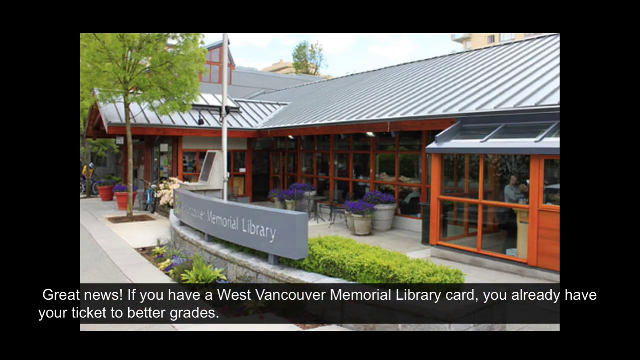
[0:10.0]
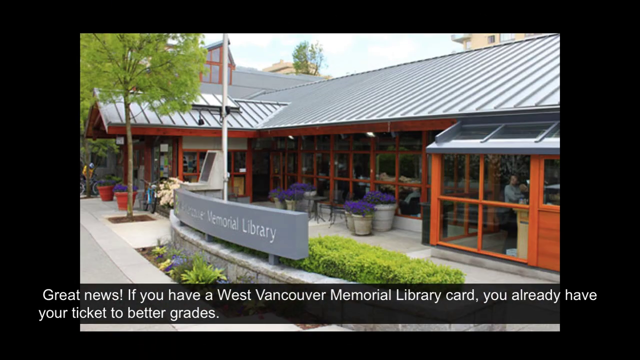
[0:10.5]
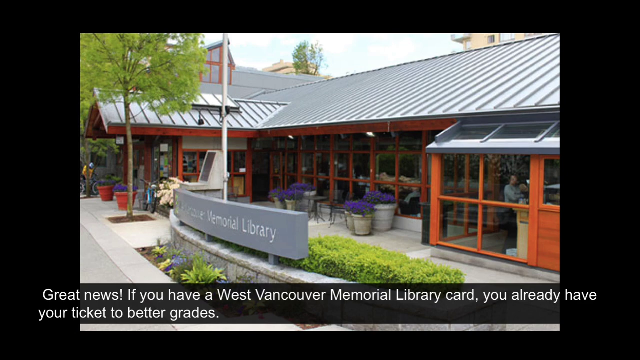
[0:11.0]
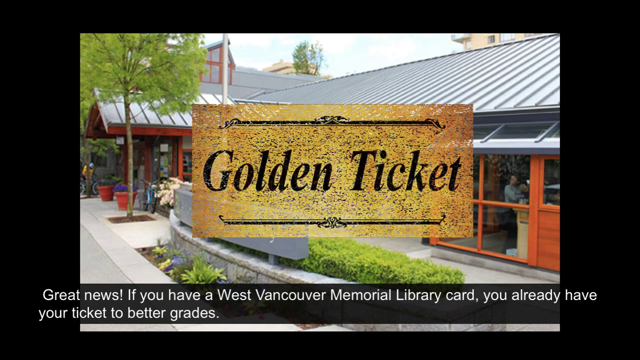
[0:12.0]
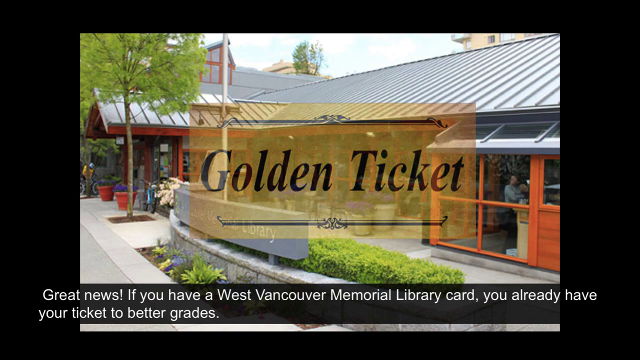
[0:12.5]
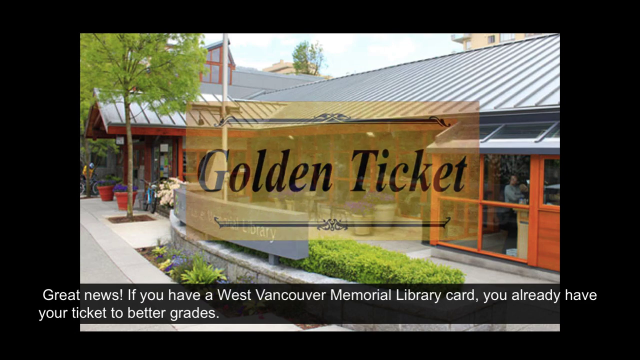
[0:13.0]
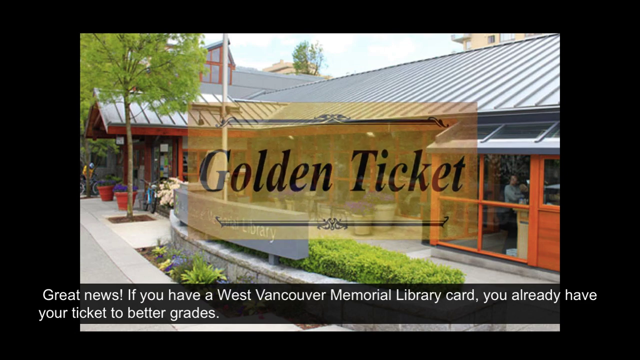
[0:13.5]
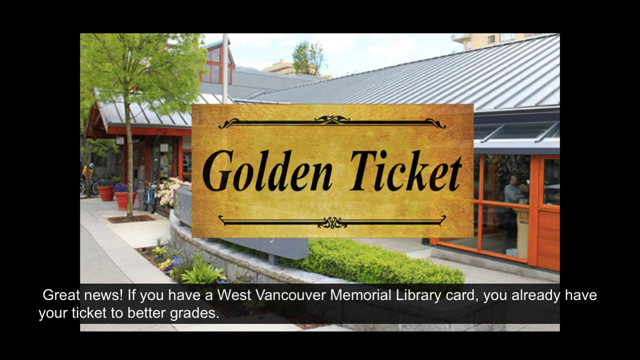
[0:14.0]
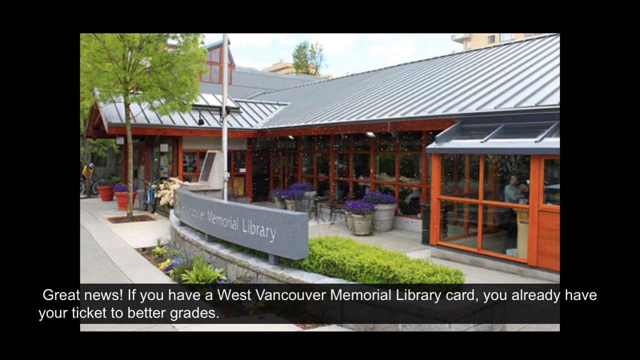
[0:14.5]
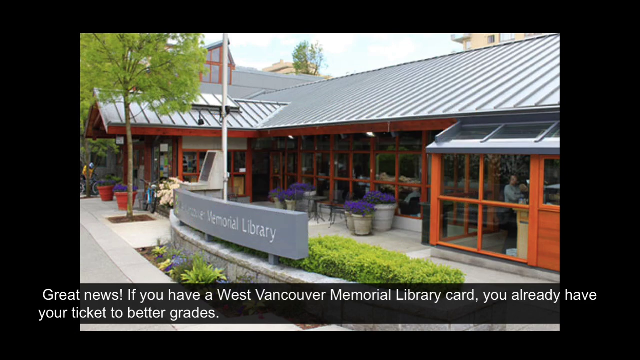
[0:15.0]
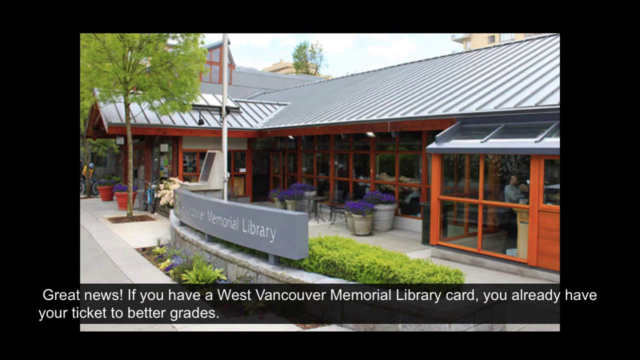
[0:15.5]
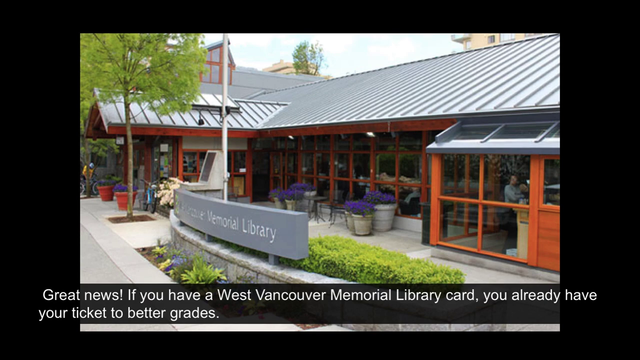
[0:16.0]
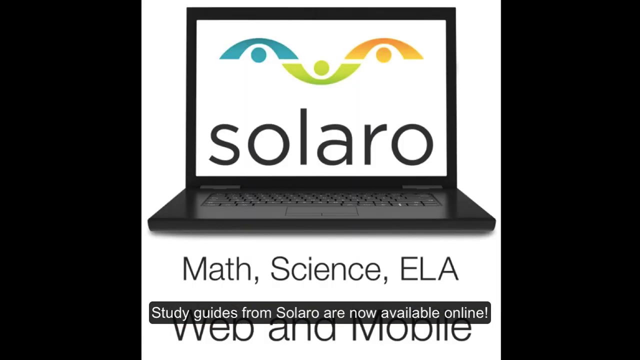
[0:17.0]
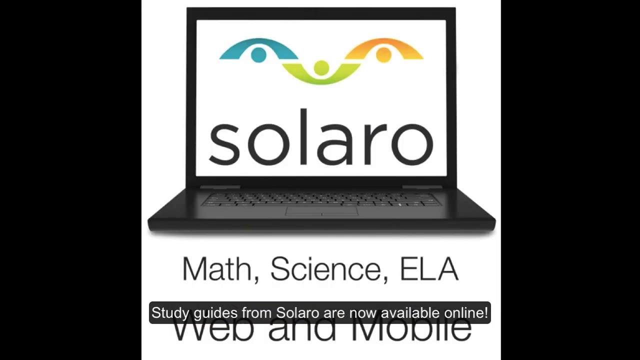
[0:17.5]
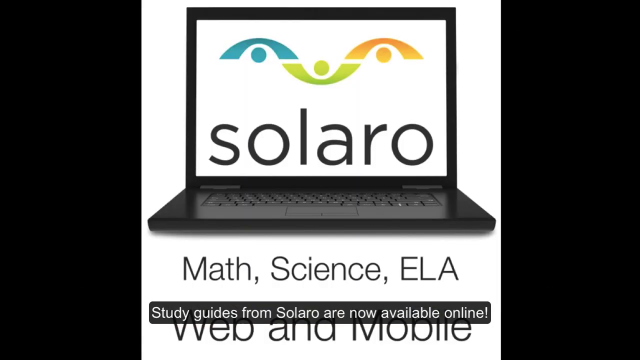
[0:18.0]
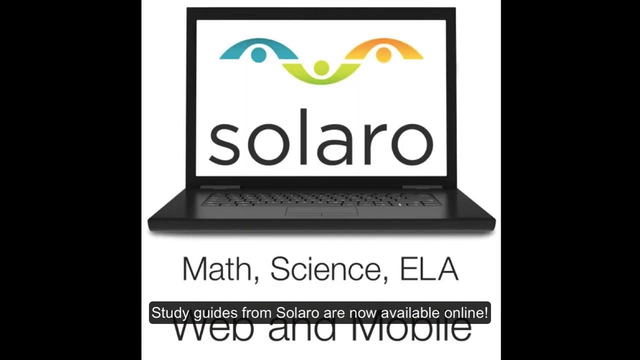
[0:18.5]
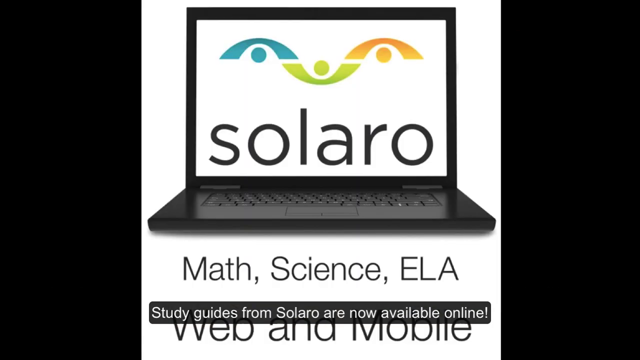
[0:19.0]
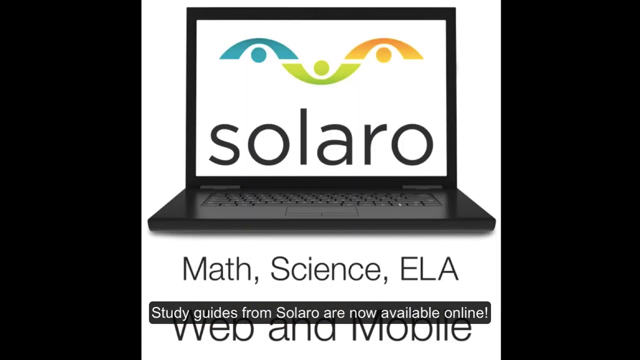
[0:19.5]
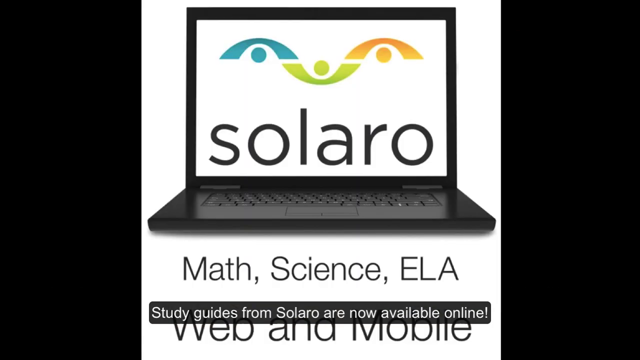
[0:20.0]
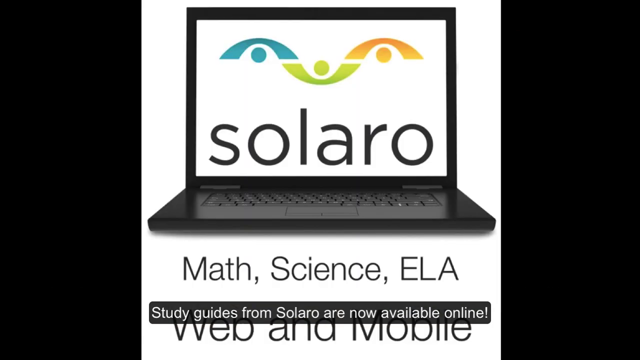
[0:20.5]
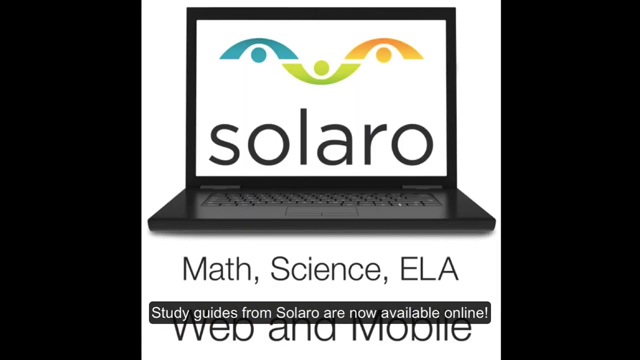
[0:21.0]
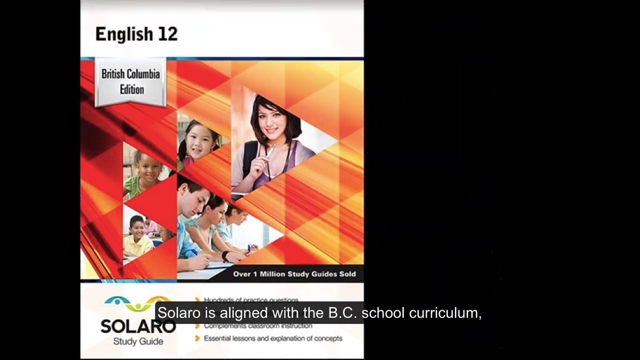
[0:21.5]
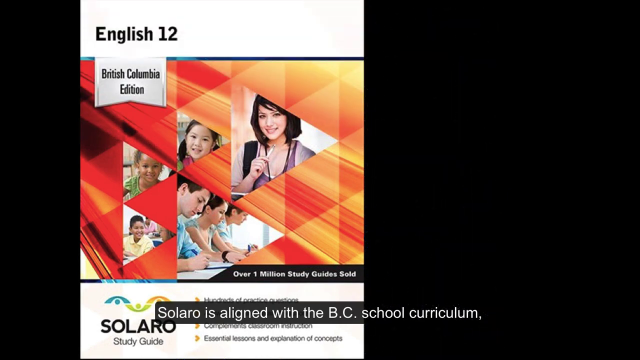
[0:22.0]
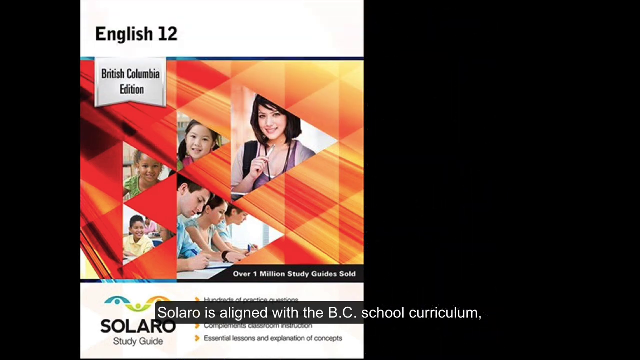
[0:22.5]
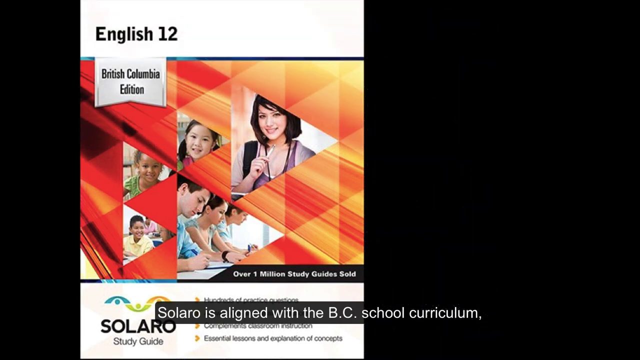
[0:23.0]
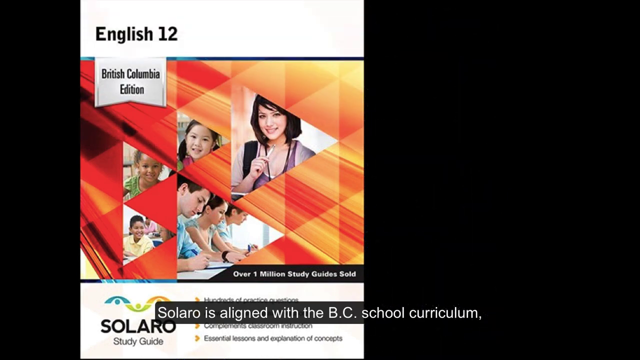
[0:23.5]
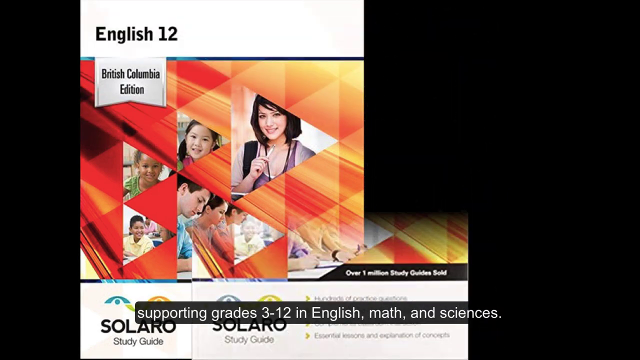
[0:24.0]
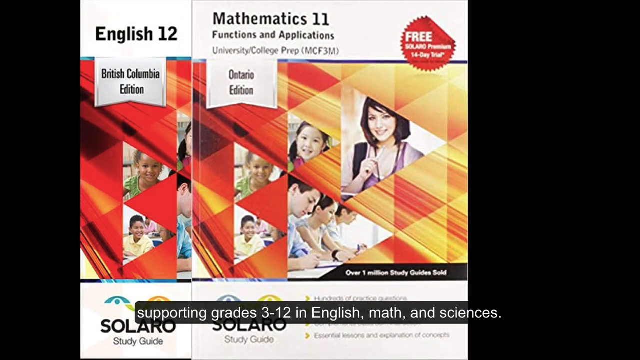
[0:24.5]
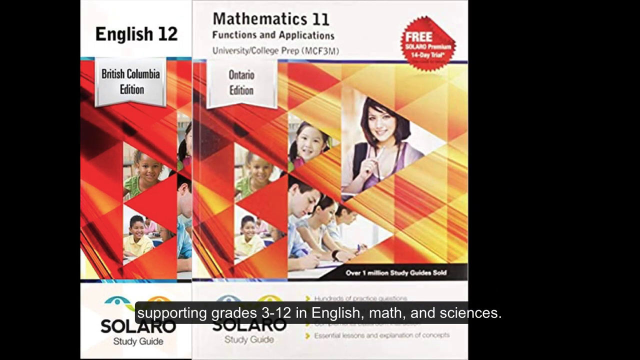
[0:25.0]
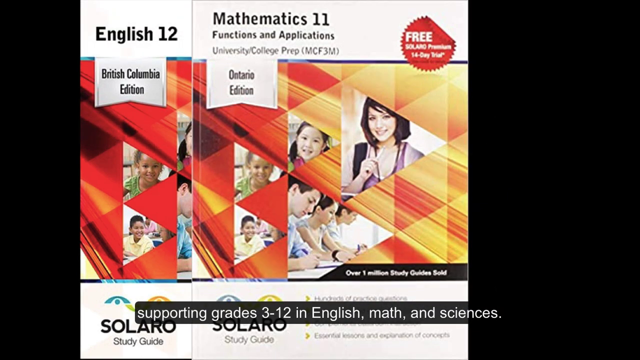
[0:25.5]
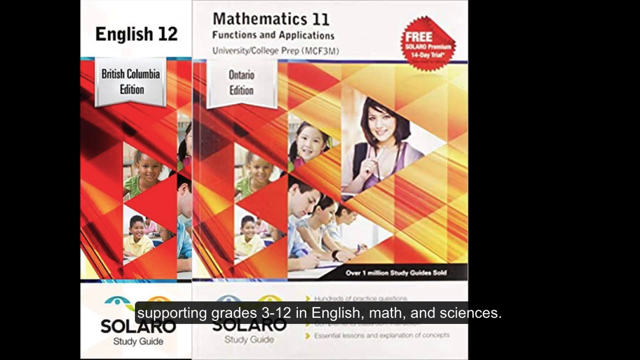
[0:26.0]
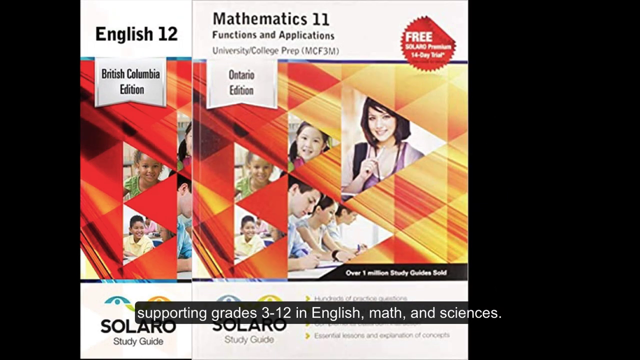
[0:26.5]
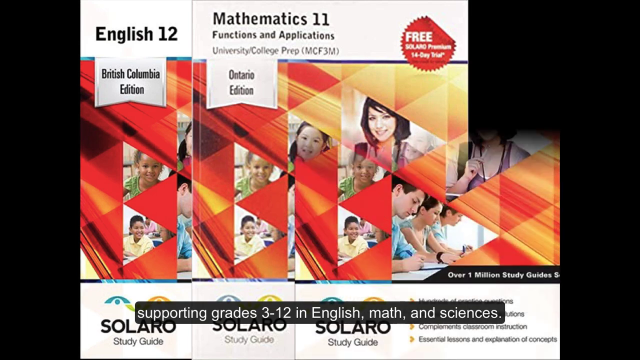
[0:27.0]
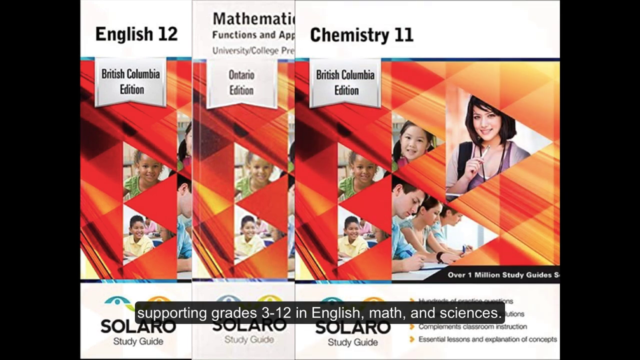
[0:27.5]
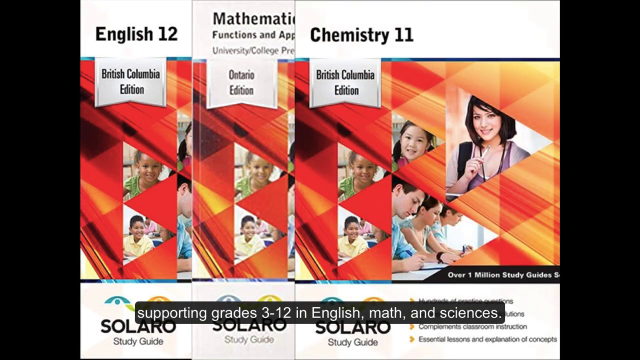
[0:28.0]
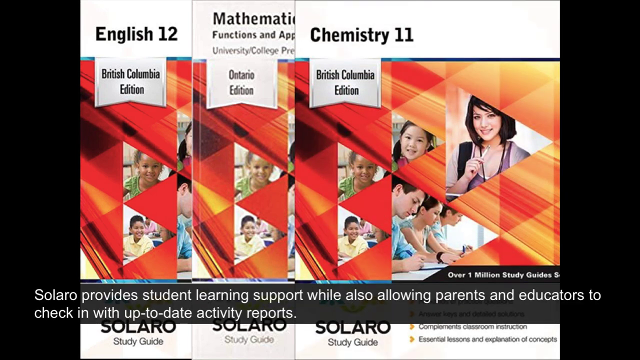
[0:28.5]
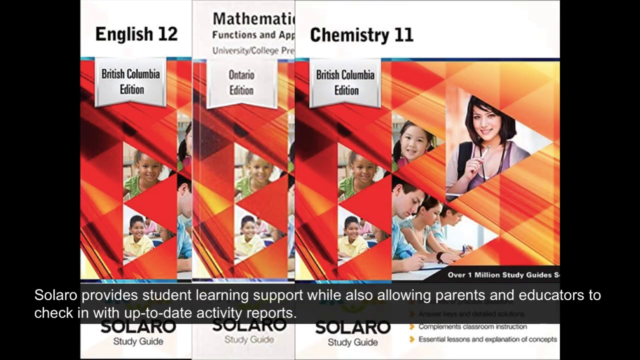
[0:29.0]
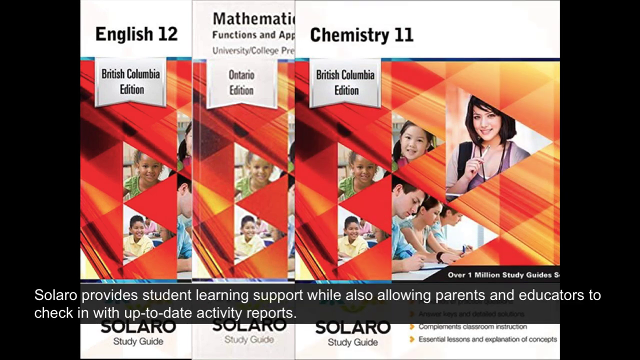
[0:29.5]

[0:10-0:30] A library with "memorial" in its name is shown, followed by a golden ticket on screen and text reading "great news. If you have a West Vancouver Memorial Library card you already have a ticket to better grades." An outside image of the West Vancouver Library appears. The video then moves to a laptop screen that says "Solaro", with text sections labeled "Math", "Science", "ELA" and "Web and Mobile". Another page follows that reads "English 12, British Columbia Edition, Solaro" and "Solaro is aligned with BC school curriculum supporting grades 3 to 12 in English, Math, and Science." A Mathematics 11 book and a Chemistry 11 book are also shown, both British Columbia Edition Solaro textbooks.